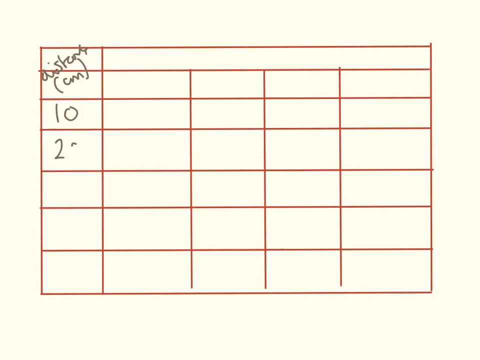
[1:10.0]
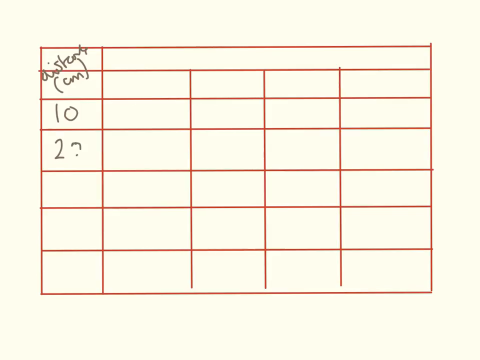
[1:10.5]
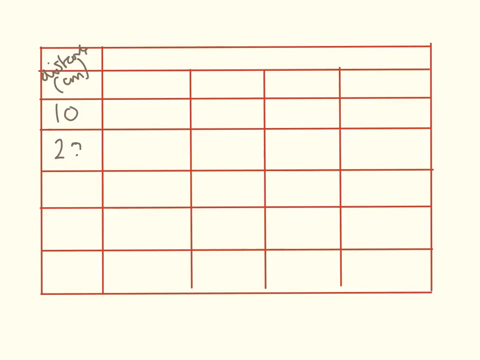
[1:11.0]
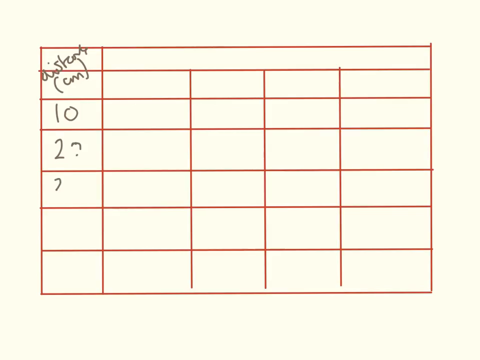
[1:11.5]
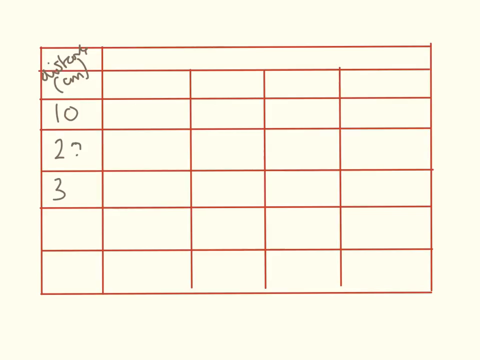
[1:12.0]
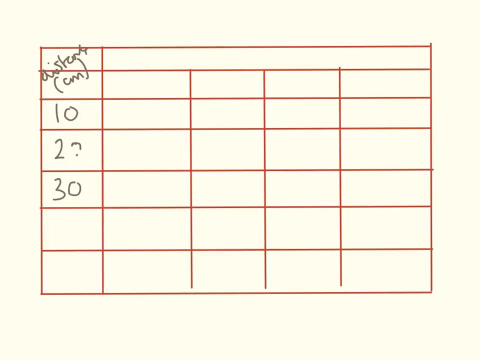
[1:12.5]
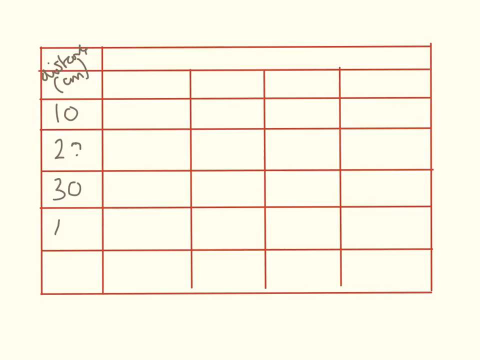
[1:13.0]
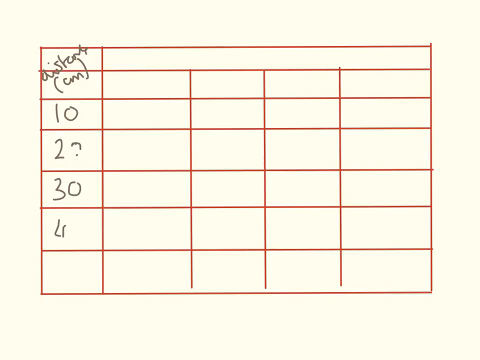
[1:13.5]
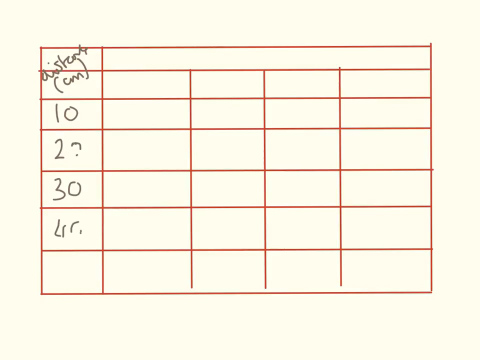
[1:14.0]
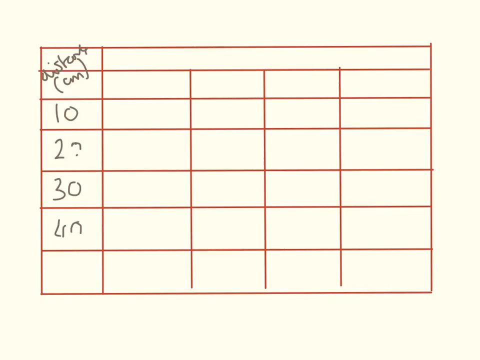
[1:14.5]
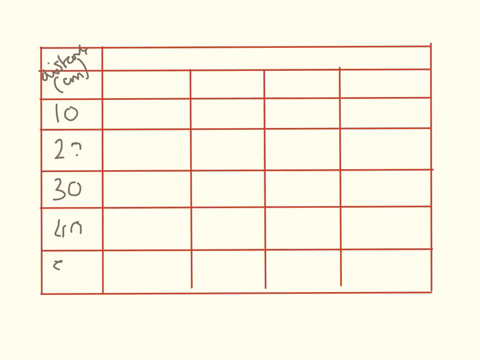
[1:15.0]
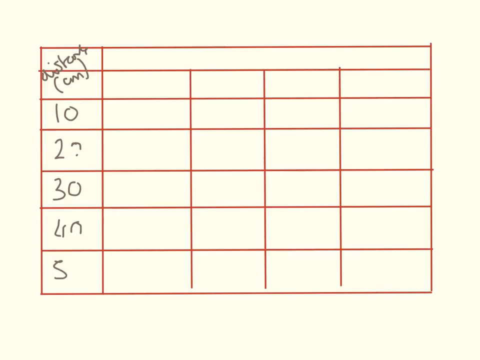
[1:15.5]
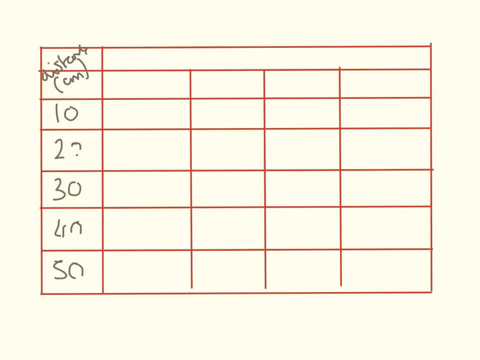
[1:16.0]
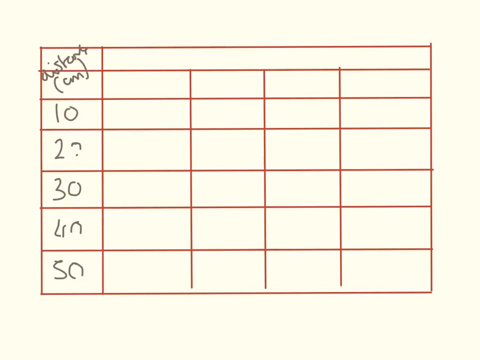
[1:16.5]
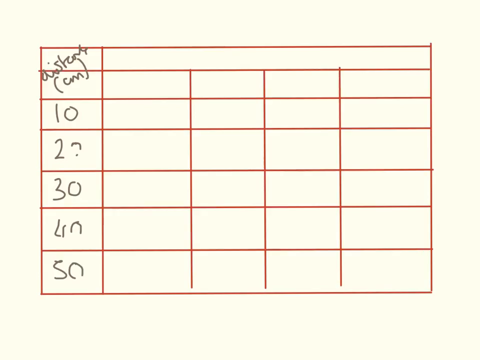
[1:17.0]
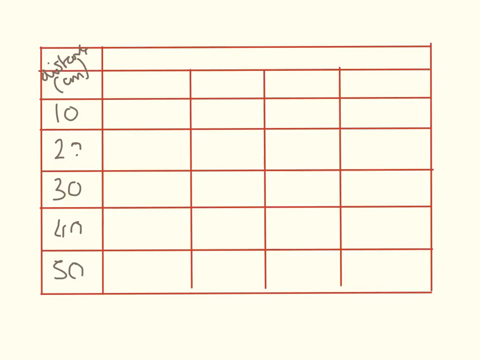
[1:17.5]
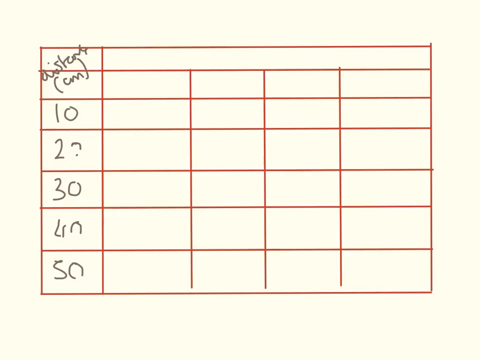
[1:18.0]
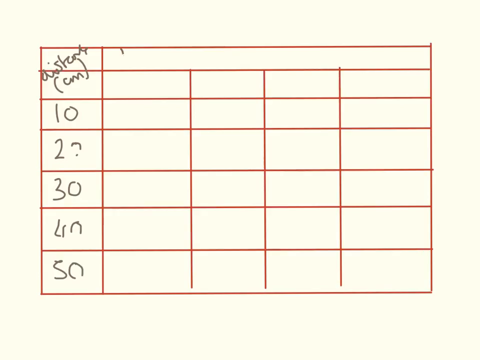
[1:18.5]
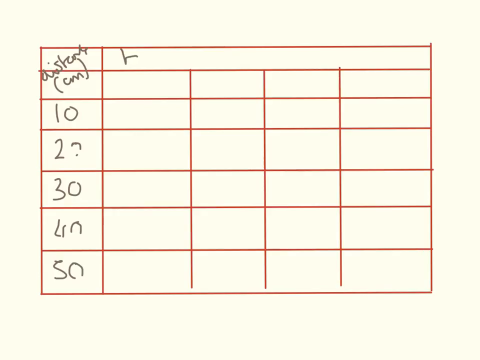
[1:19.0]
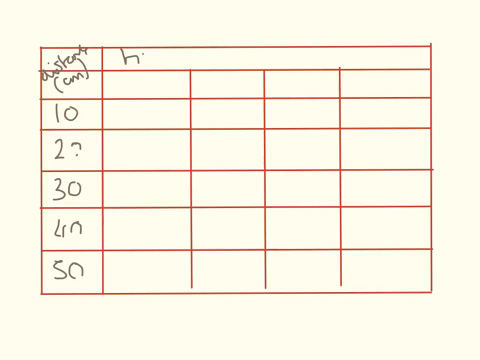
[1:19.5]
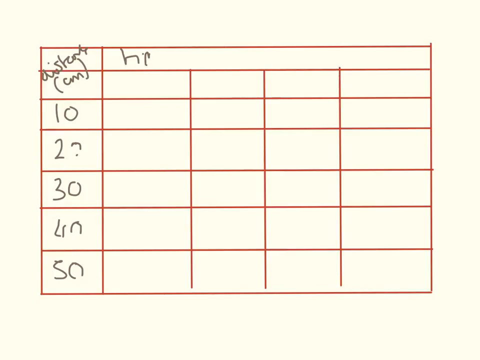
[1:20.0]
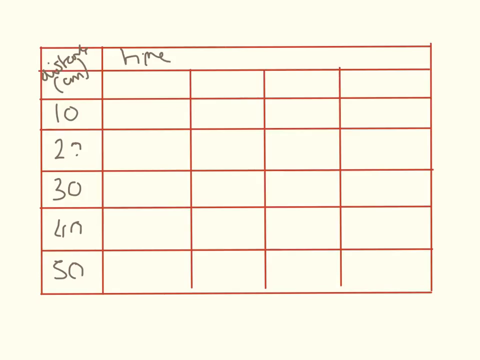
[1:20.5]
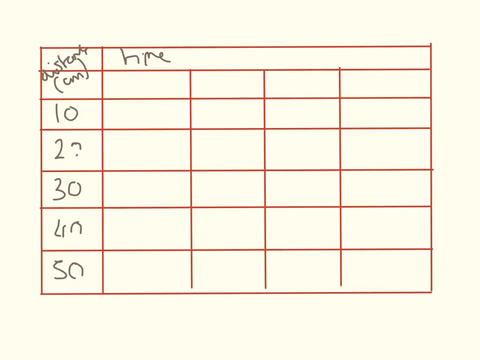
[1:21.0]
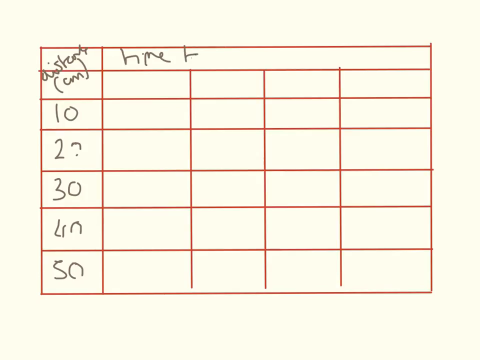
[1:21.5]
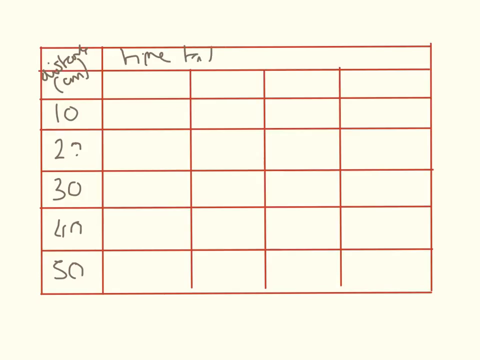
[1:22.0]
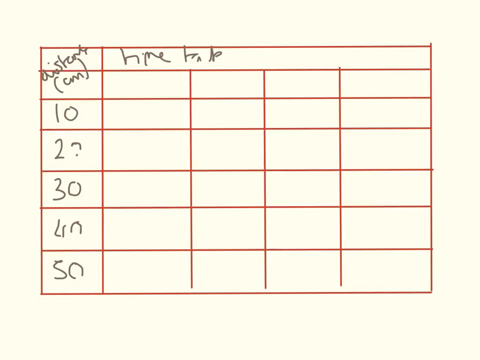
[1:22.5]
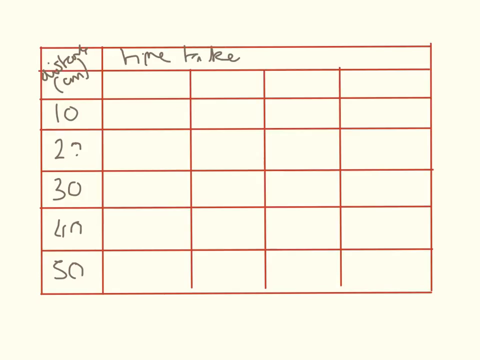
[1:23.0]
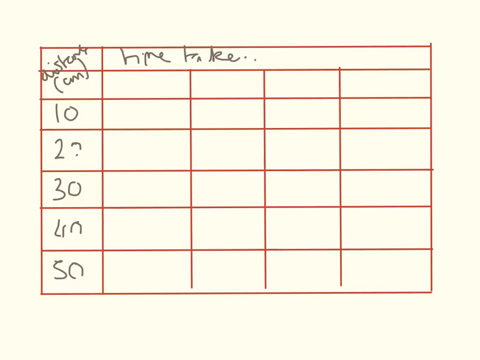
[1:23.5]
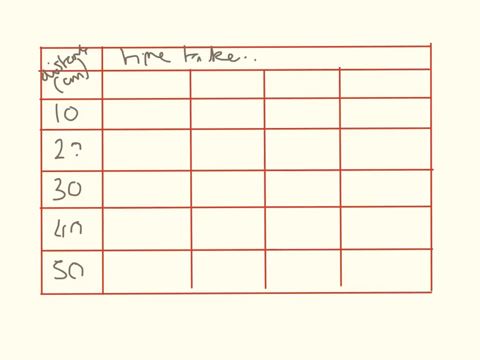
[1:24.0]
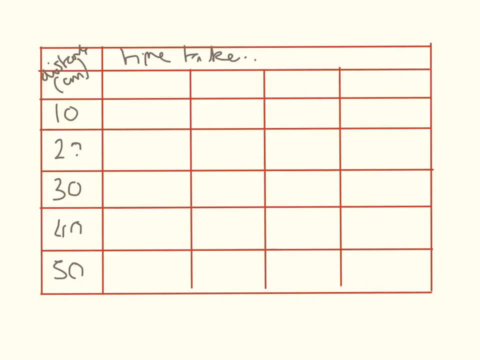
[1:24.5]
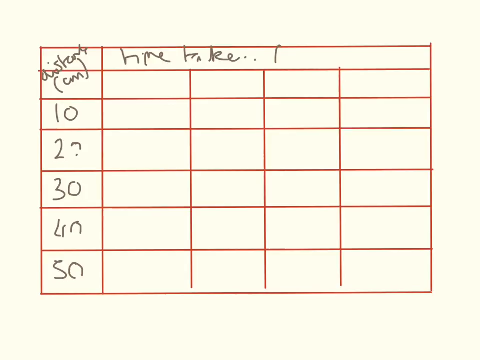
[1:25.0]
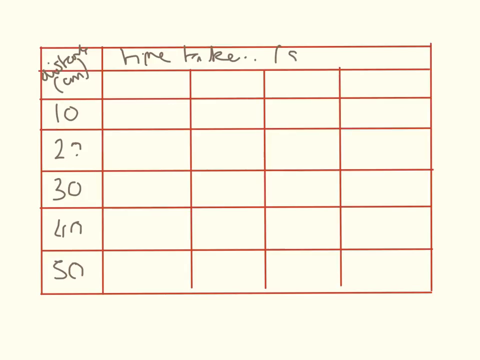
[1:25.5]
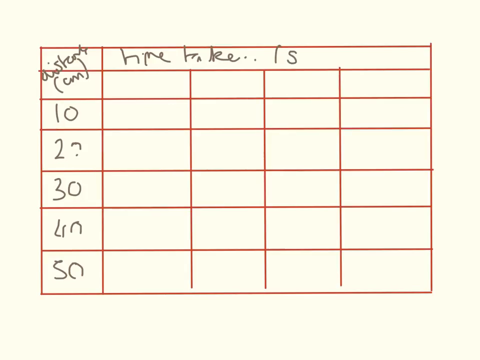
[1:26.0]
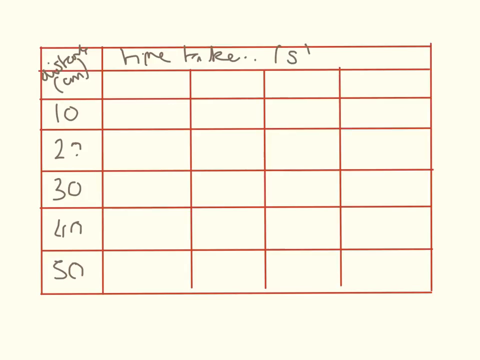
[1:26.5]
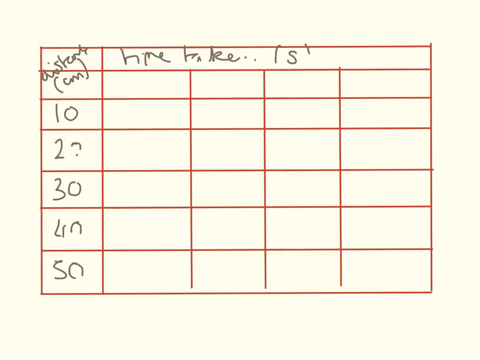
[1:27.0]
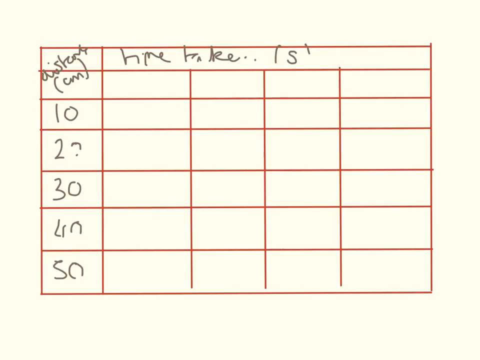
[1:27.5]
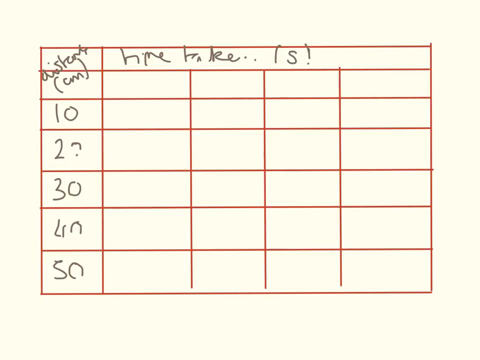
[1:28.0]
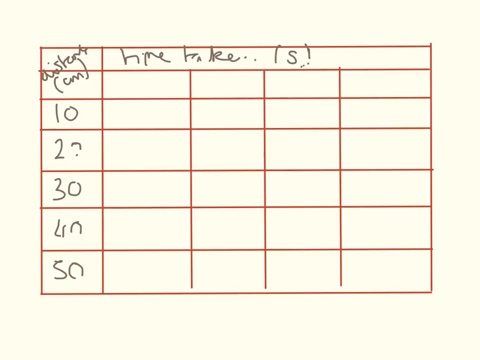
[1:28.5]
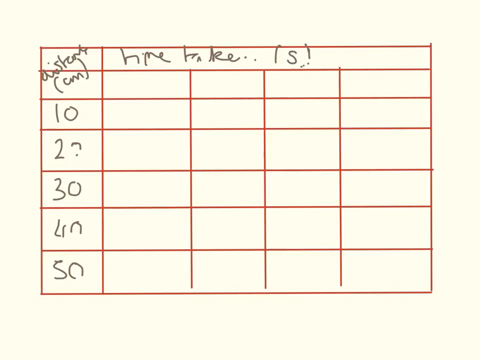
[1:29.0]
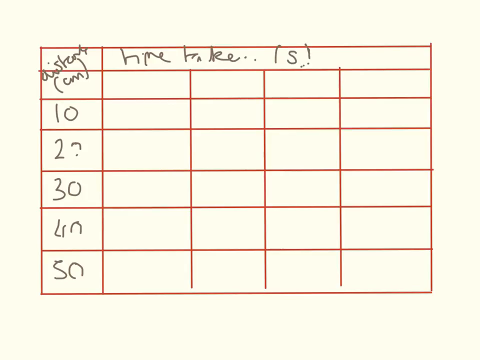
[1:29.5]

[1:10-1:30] On a yellow background there is a very large red grid box with vertical lines and about six horizontal lines. The boxes are uneven, as if not properly measured, some smaller and some larger. Gray writing in the top left corner is hard to make out but looks like it is in cursive, and text reads "centimeters." The number 10 is visible, then 2 or 20 is written, followed by 30, 40 and 50 on the left side. At the top, something else hard to make out is written, looking like the words "take you." As the writing goes on, gaps form in some of the numbers, making them hard to read.